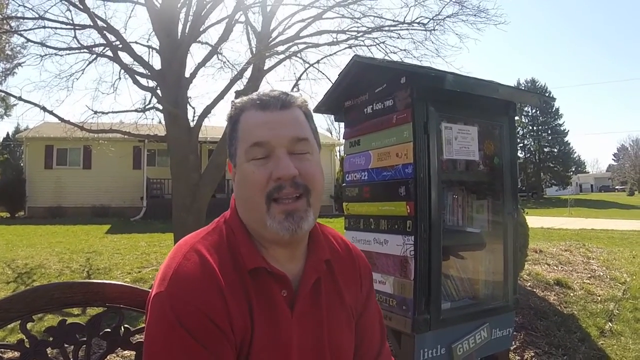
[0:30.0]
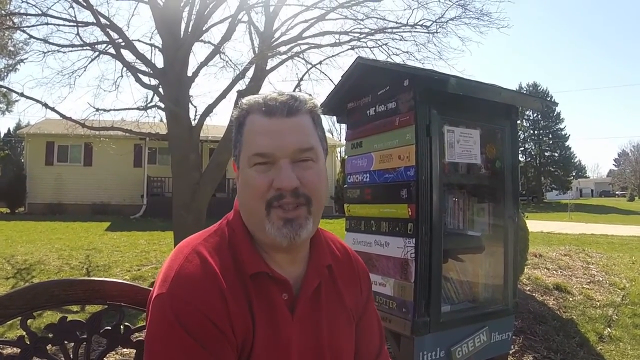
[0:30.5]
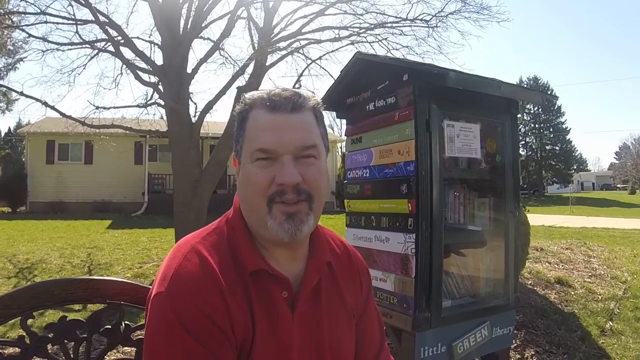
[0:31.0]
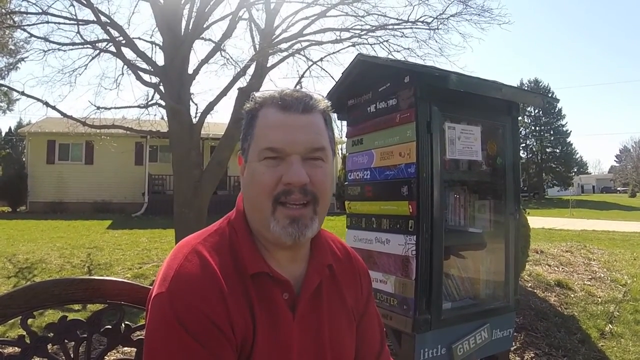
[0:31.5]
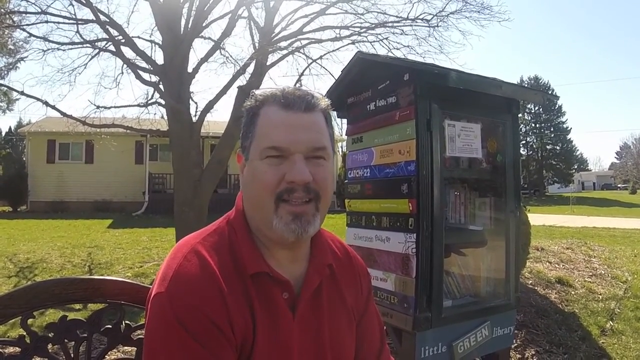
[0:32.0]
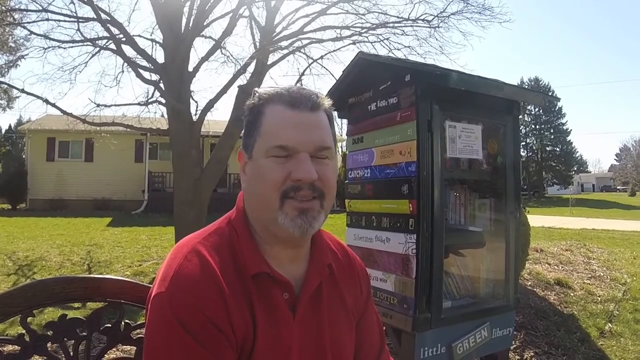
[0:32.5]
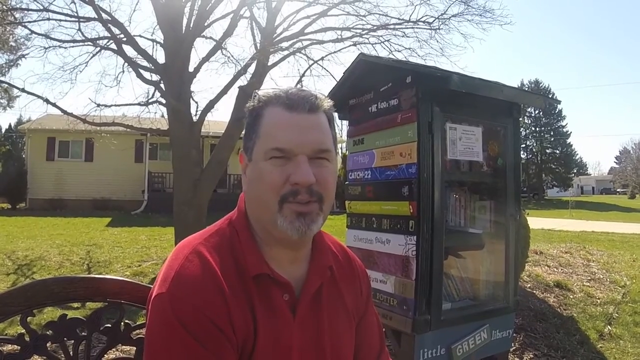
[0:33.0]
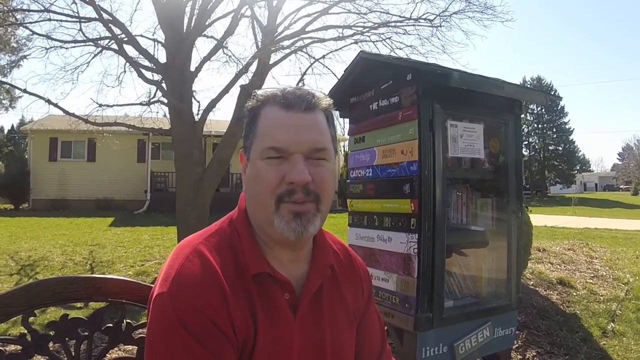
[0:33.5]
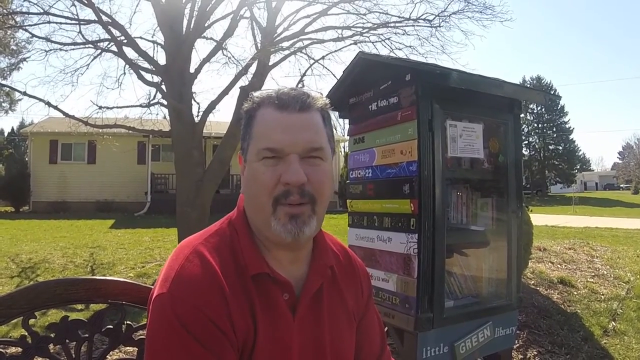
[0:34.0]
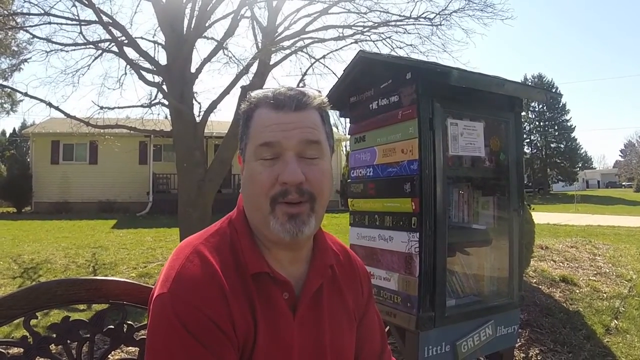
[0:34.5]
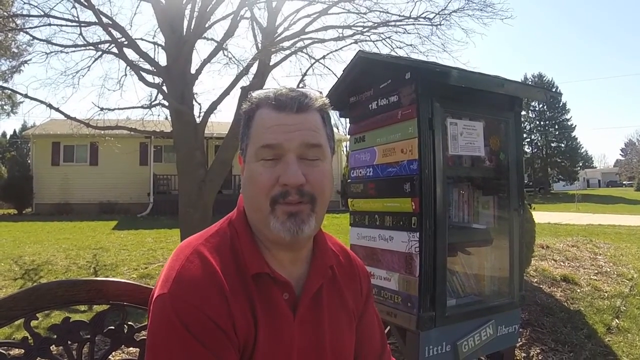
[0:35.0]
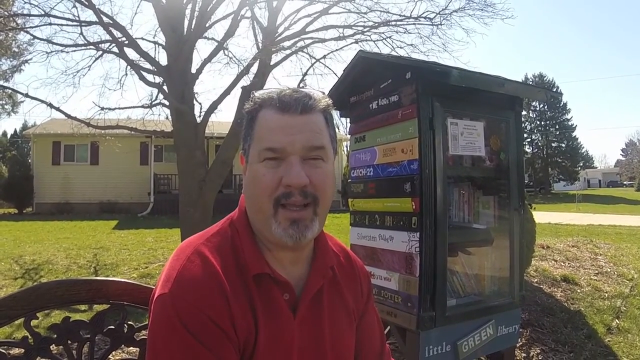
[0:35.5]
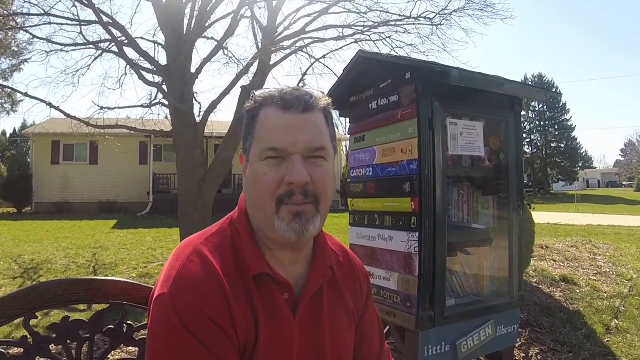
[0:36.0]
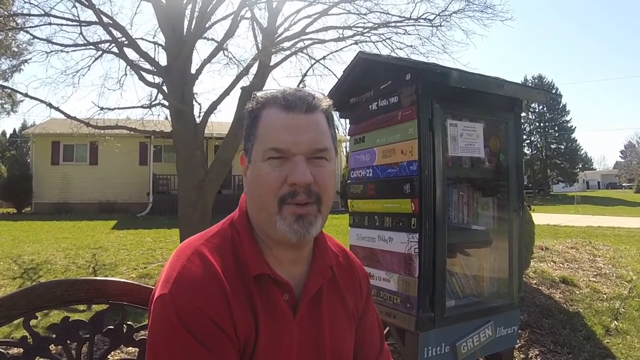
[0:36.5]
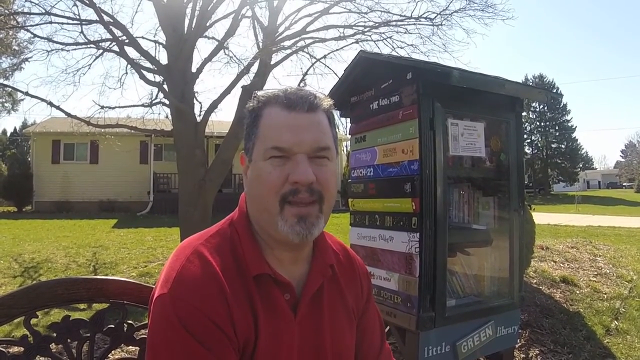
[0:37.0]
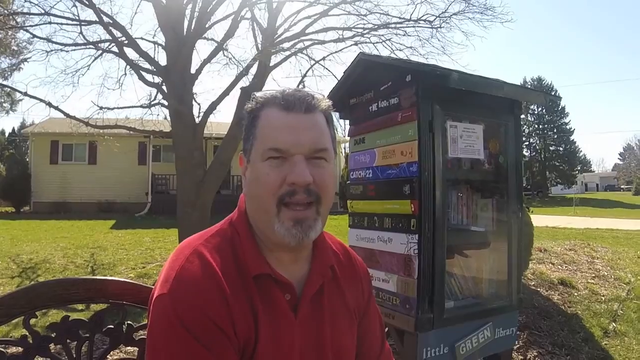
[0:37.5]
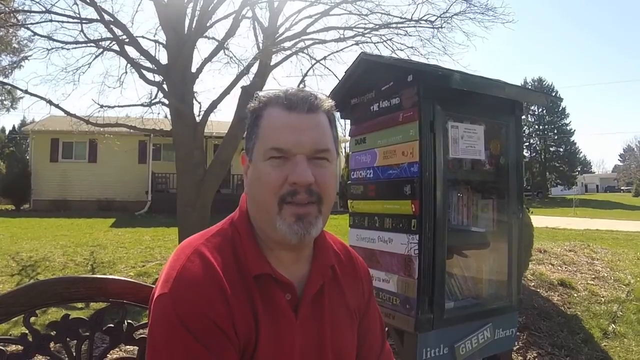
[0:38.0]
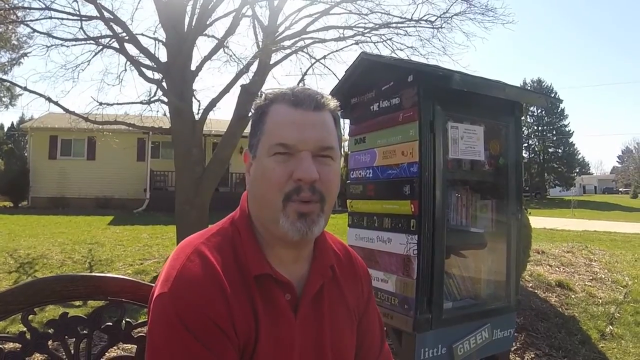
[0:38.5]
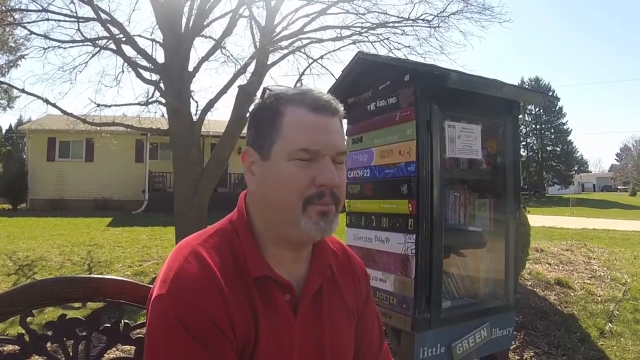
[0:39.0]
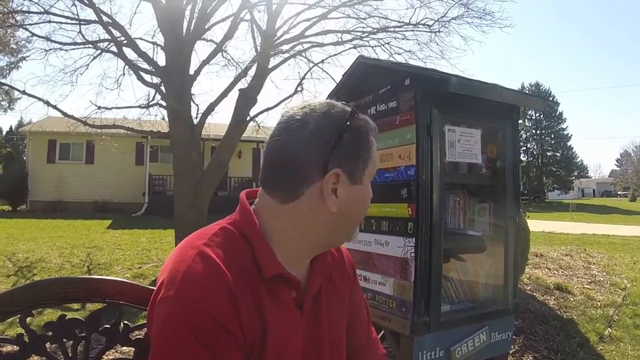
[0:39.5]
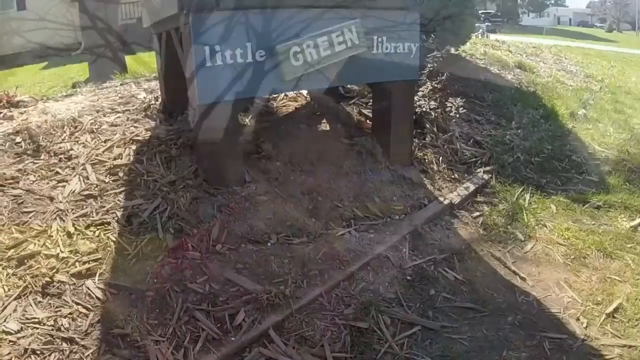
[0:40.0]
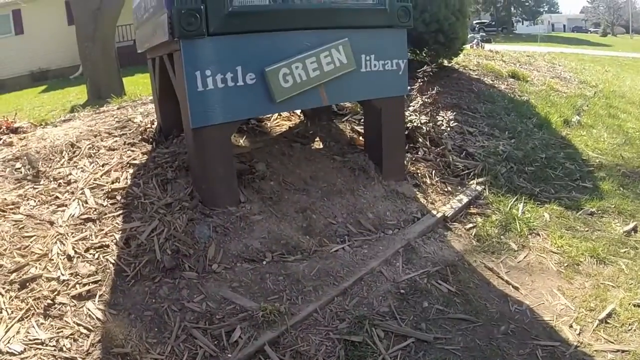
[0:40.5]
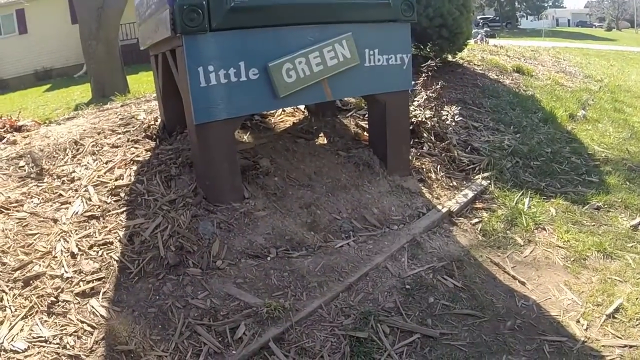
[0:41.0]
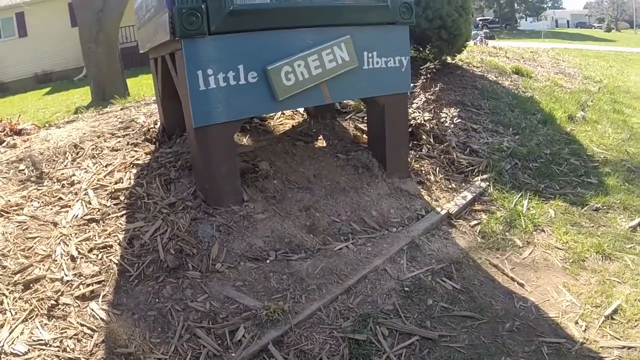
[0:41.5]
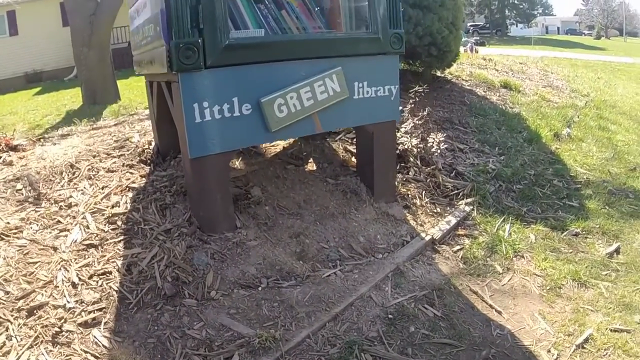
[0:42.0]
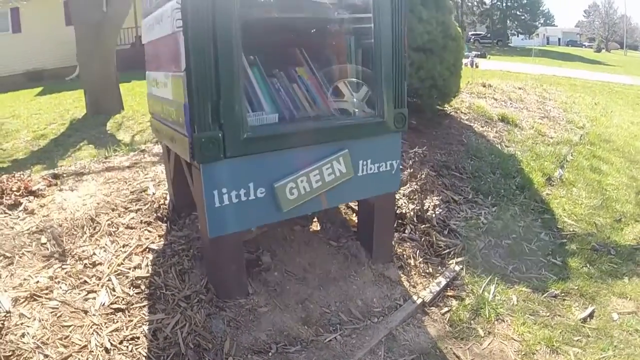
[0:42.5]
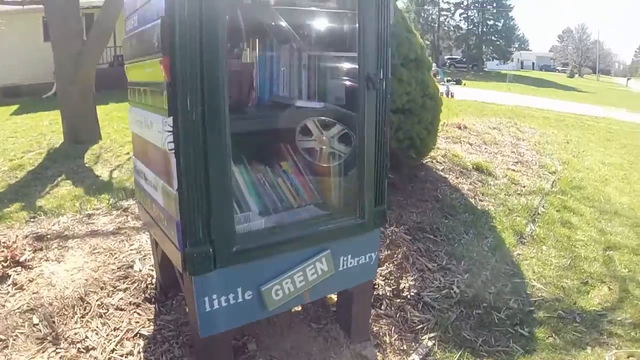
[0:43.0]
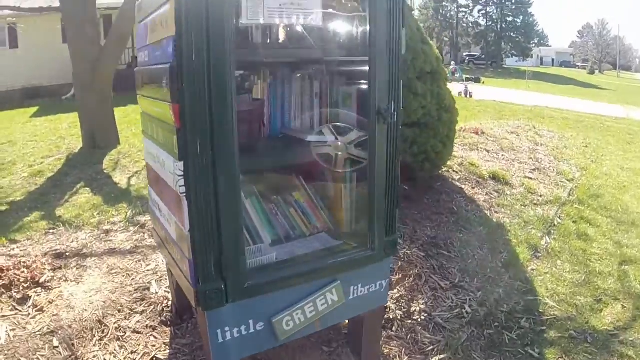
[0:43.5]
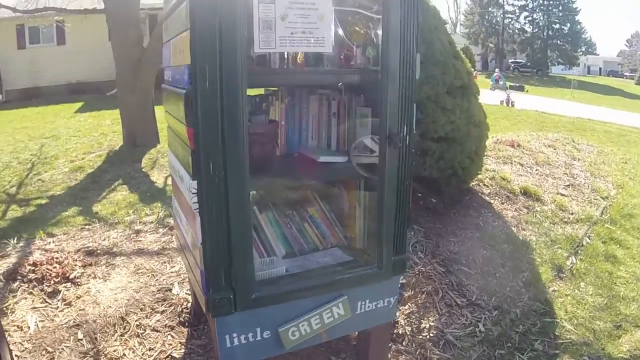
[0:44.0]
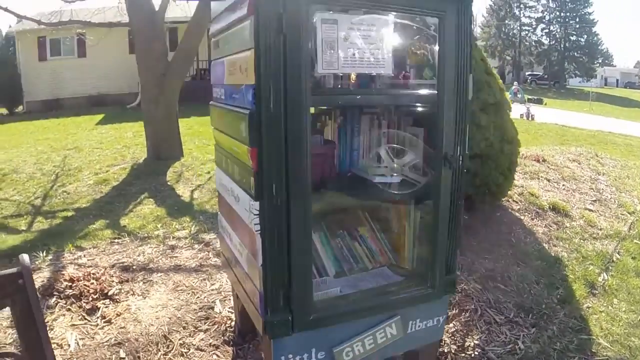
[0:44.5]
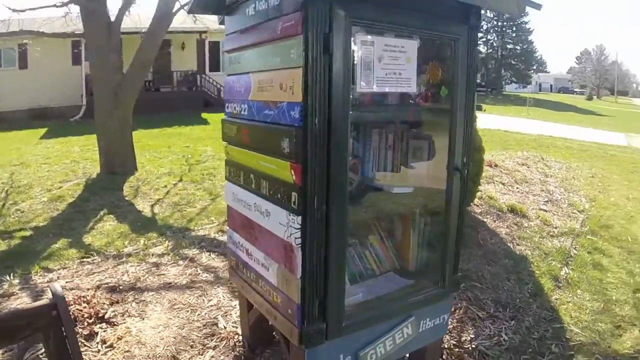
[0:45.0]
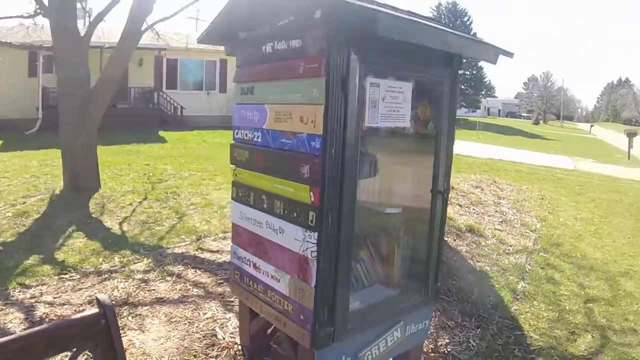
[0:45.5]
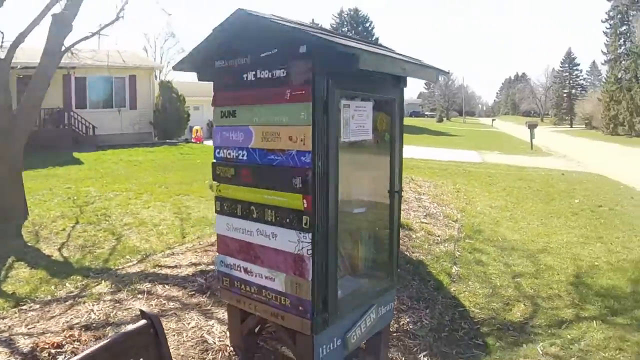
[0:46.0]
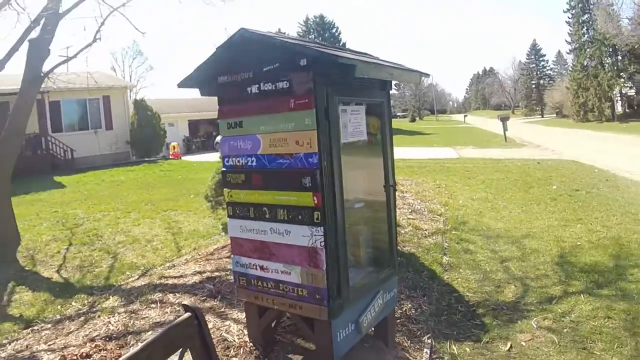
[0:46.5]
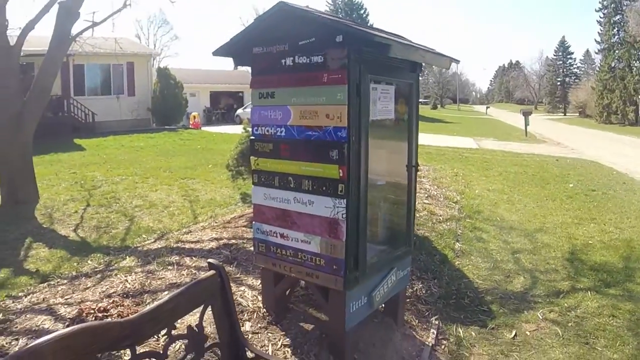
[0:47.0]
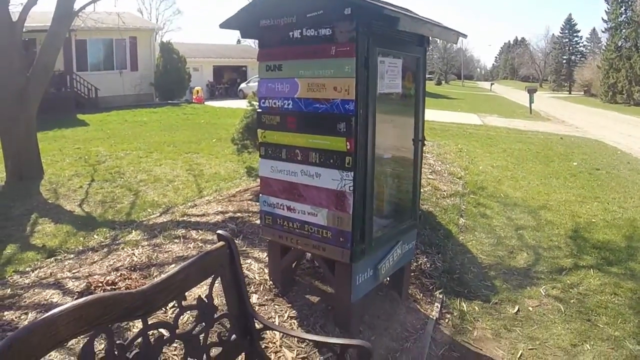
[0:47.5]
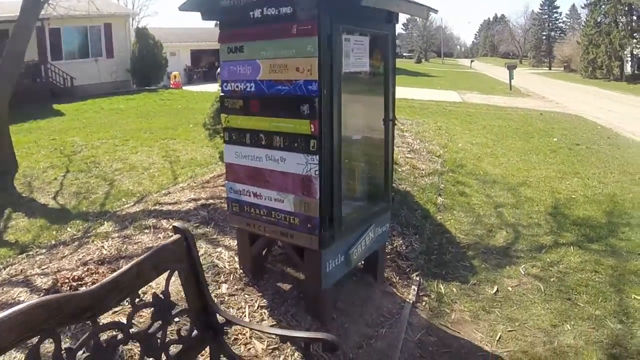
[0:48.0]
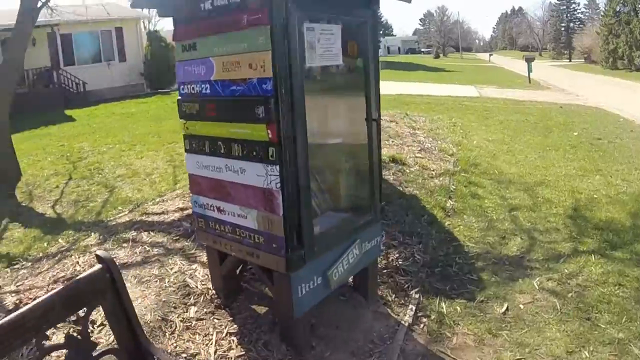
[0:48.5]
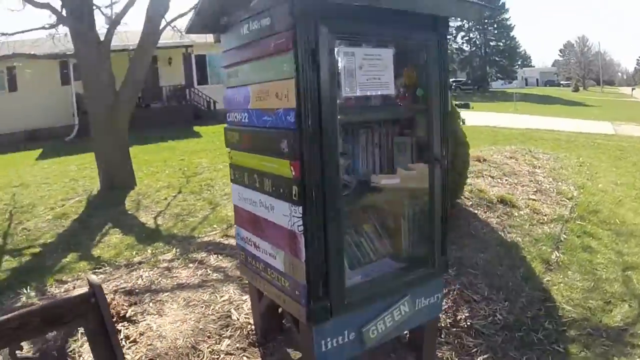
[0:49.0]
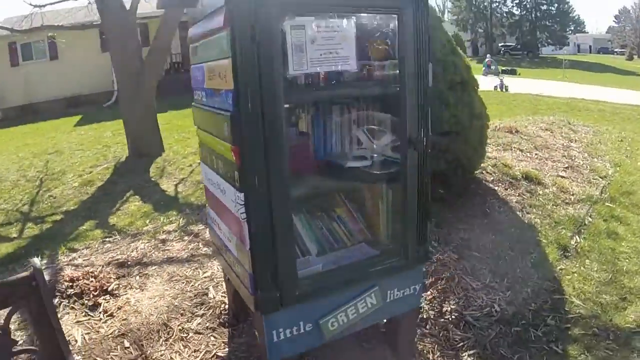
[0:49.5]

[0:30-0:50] The man is still speaking, then gestures with his head toward the little green library. The camera pans over to the book nook itself. The ammo box does not appear anywhere here; the book nook just has books in it and some colorful signage on the side.